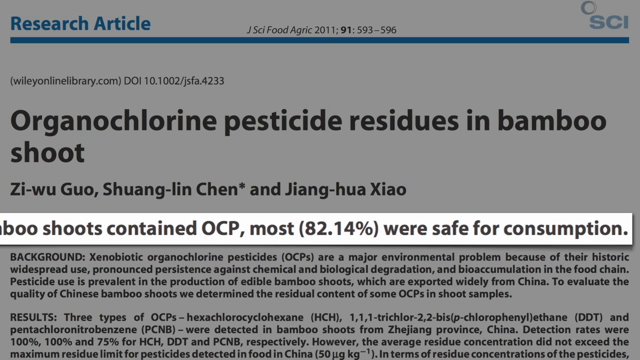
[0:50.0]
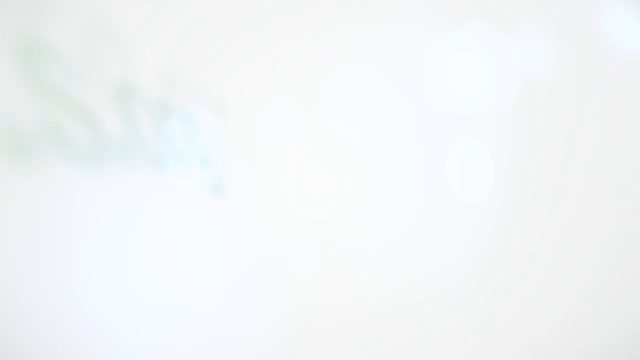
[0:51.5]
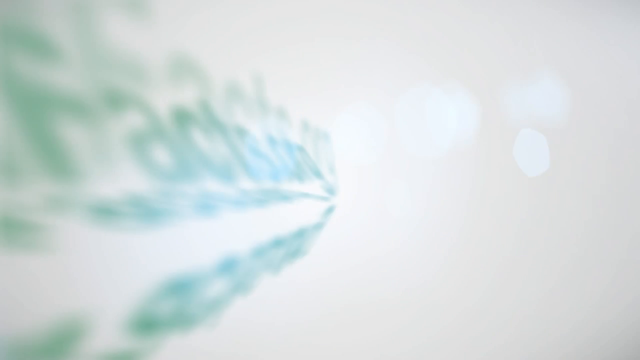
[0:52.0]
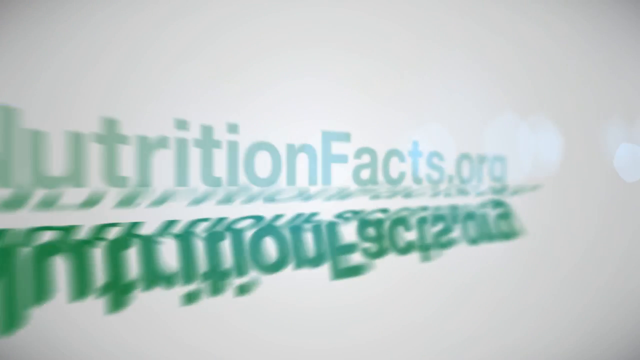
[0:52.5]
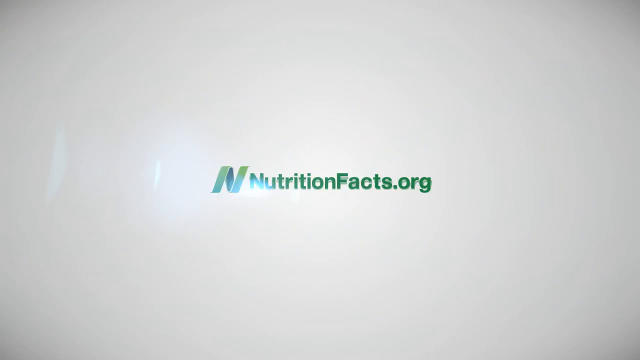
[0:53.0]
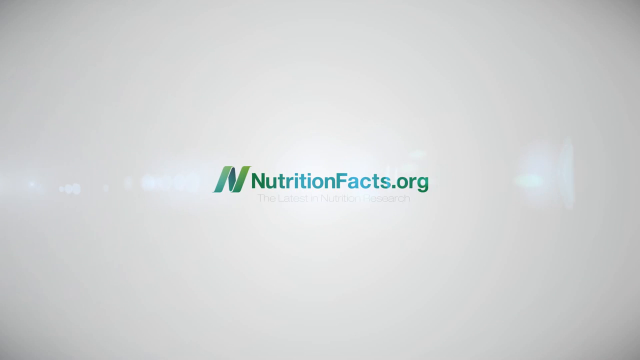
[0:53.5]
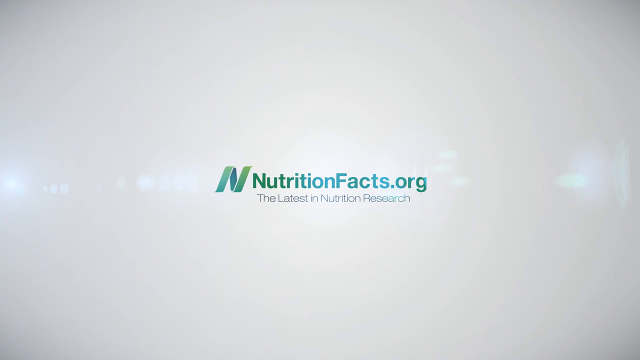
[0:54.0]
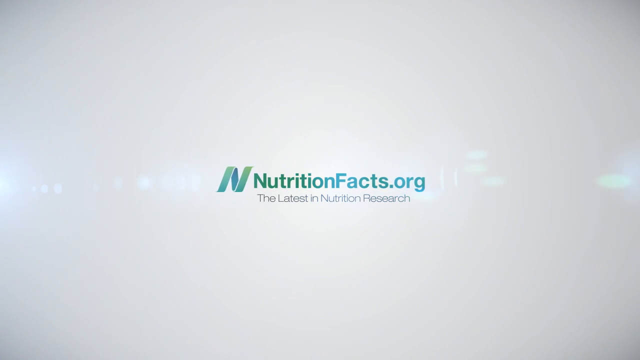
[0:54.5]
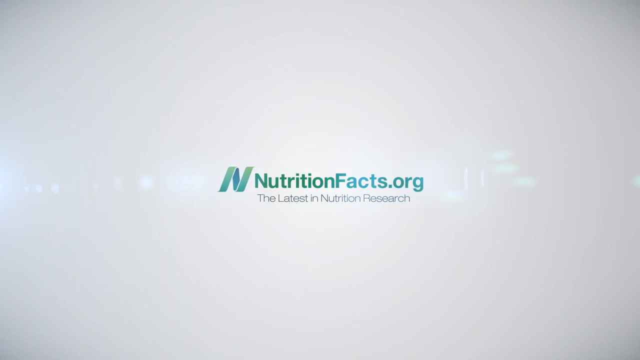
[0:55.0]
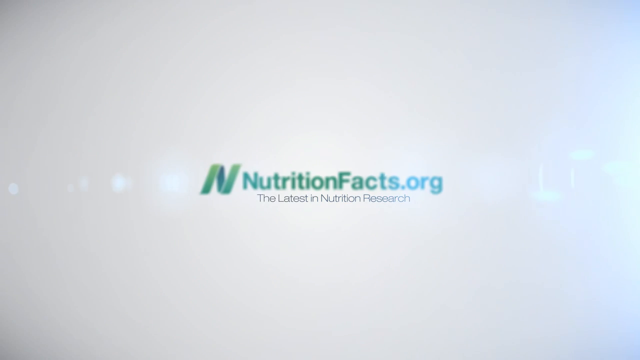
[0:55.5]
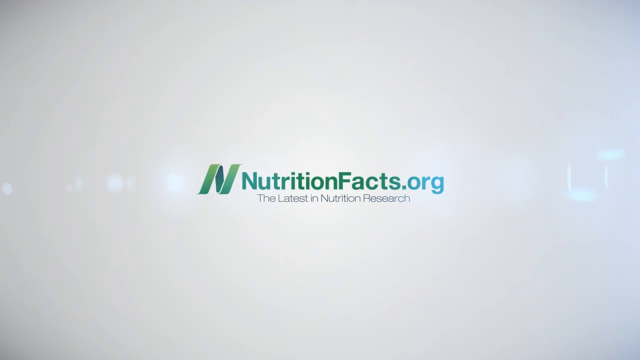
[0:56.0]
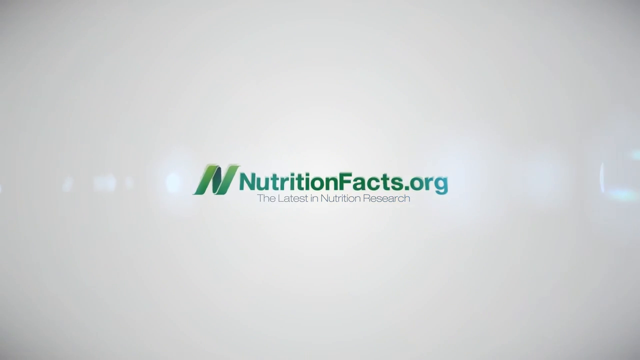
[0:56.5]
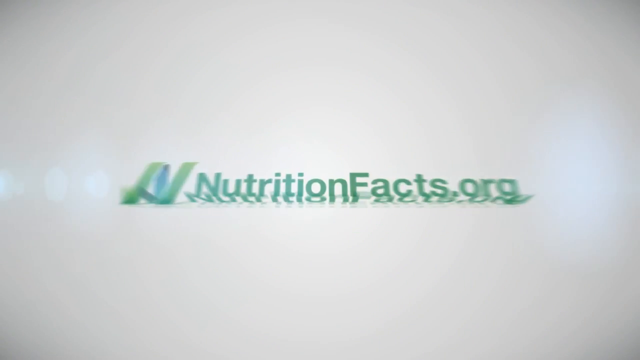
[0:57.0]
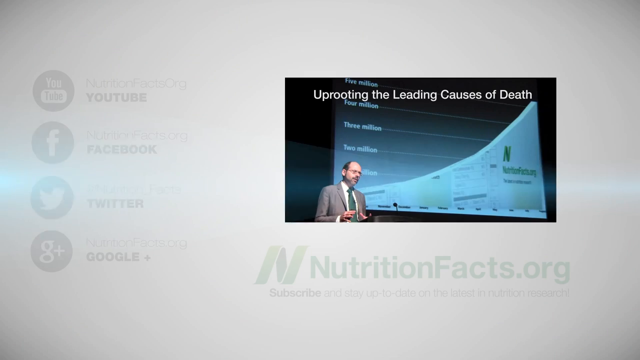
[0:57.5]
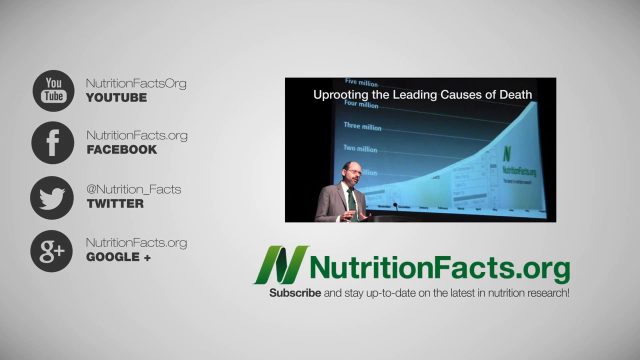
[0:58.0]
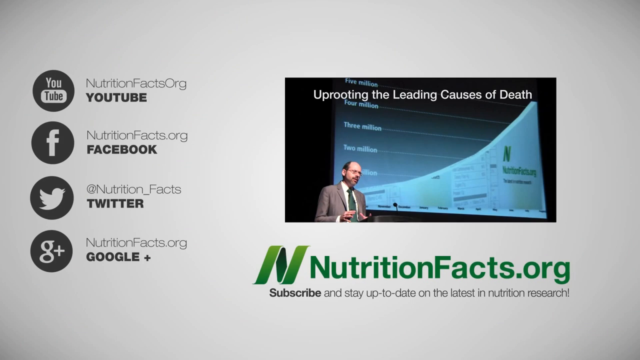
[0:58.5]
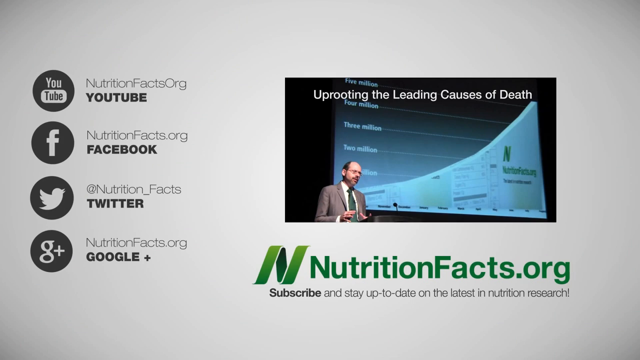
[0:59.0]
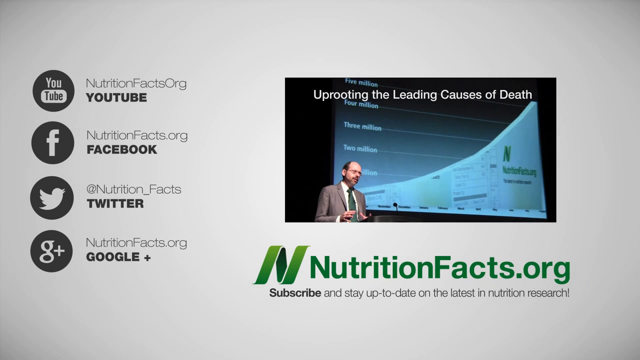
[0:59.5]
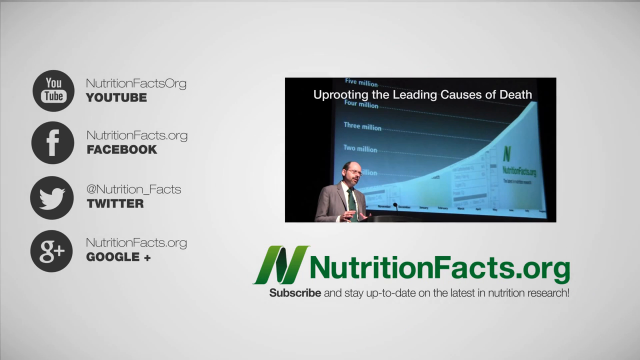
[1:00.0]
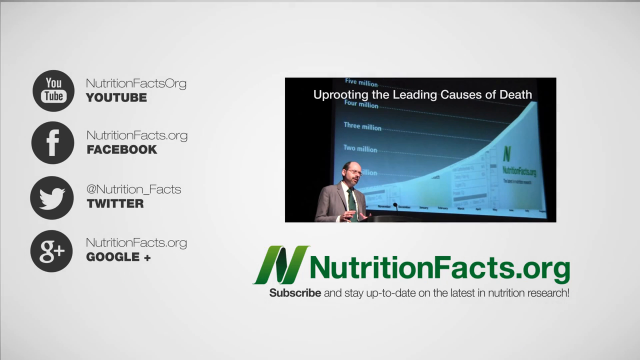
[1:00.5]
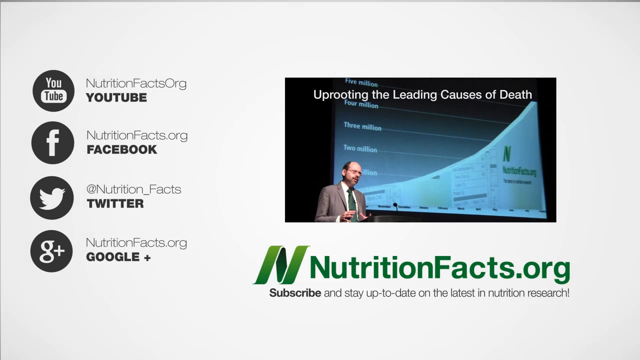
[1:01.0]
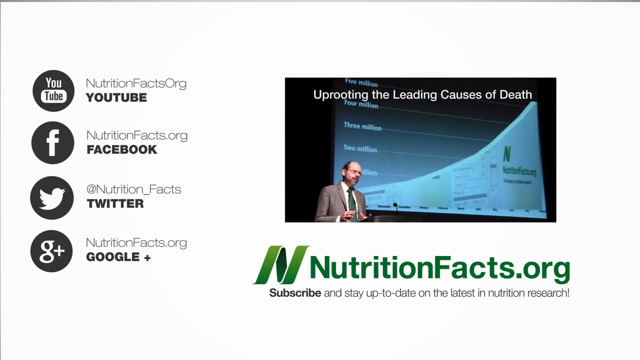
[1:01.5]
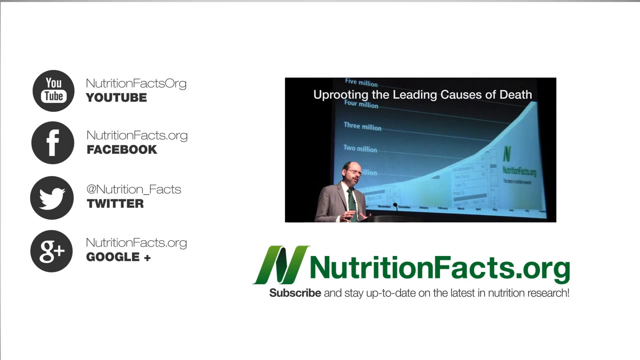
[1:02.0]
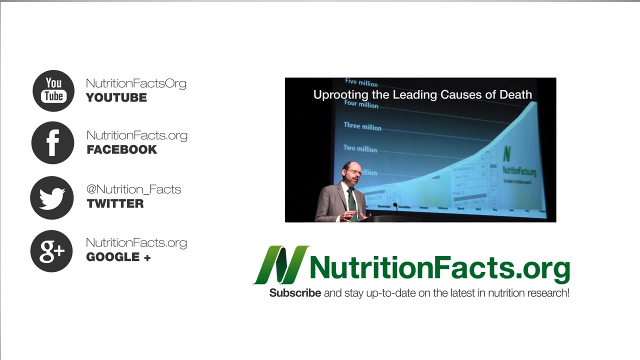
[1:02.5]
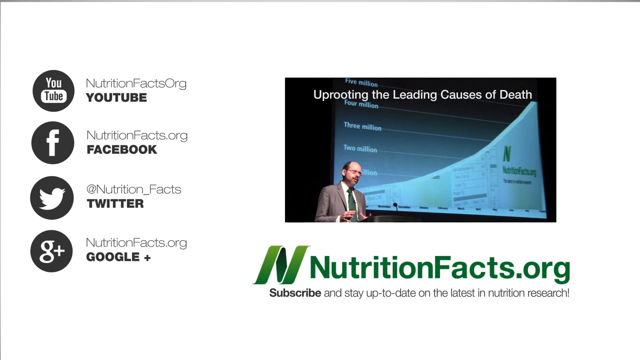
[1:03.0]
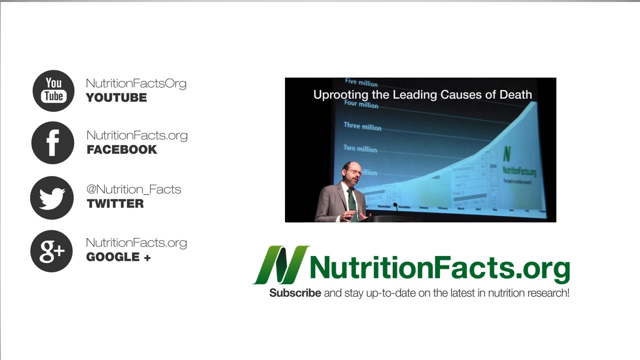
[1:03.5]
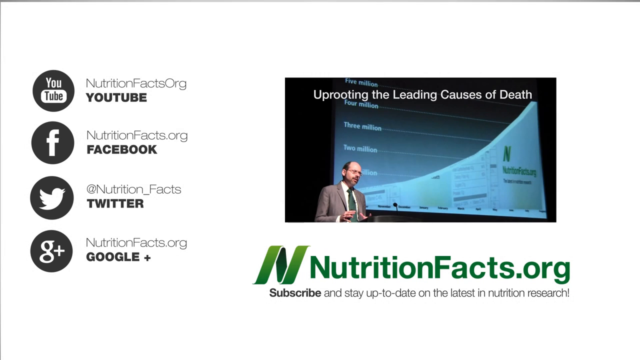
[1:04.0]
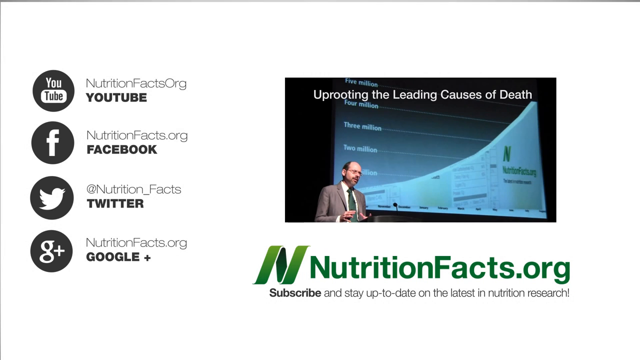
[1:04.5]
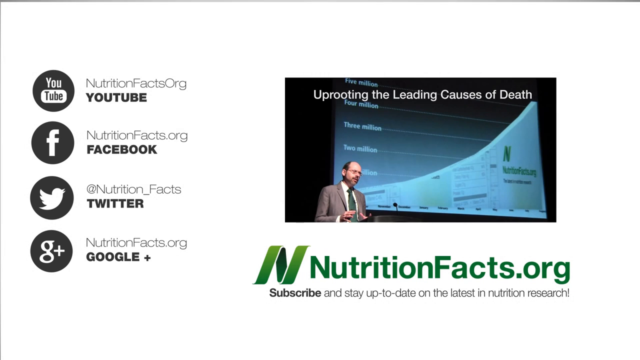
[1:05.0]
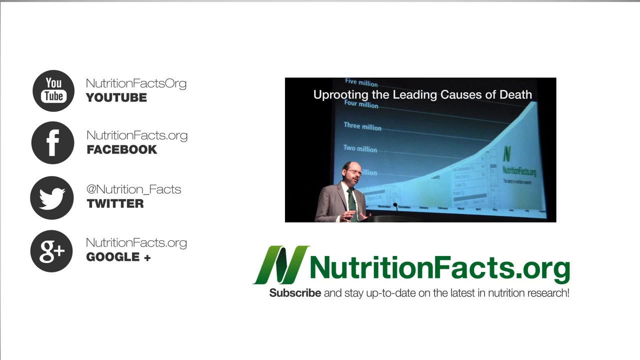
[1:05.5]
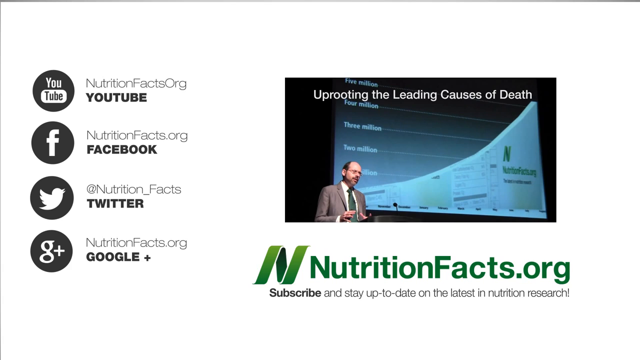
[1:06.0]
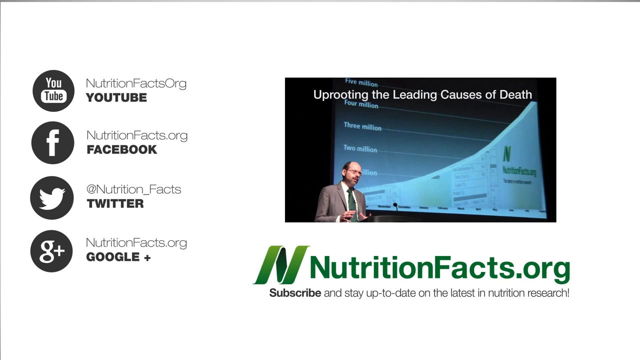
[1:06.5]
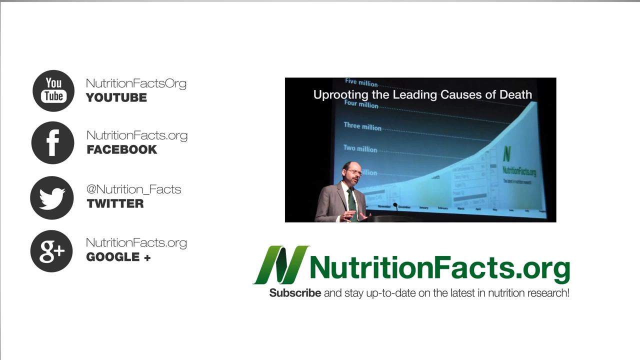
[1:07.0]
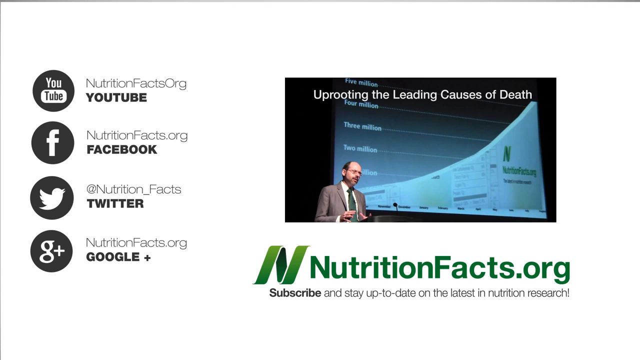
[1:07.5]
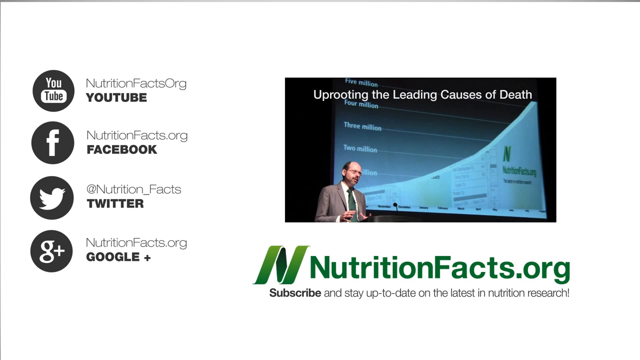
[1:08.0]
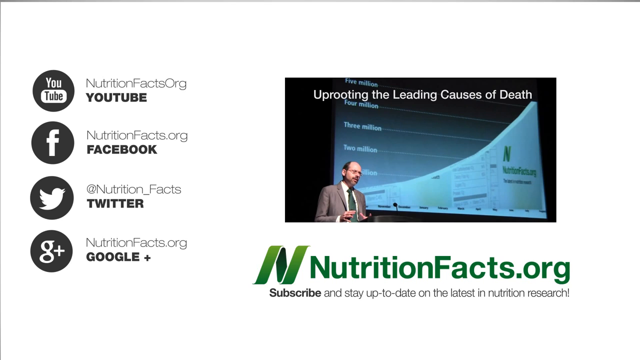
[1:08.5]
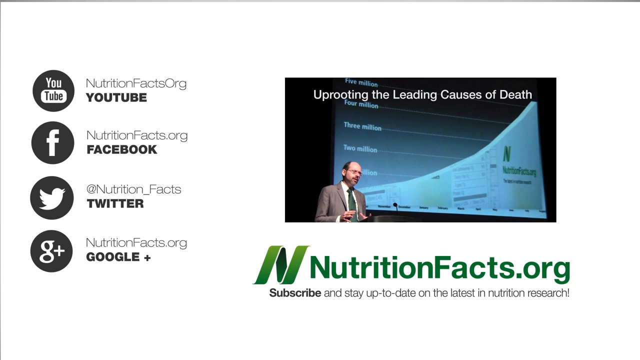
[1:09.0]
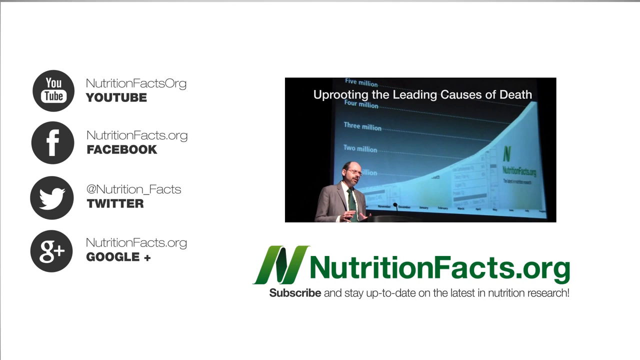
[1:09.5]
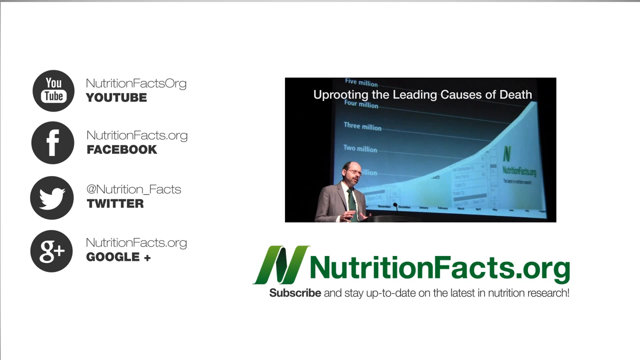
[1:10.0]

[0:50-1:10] The top of a research article is shown, with "research article" in blue lettering in the top left-hand corner and the journal information and website address in small black lettering. Beneath is the bold headline "Organochlorine Pesticide Residues in Bamboo Shoot" and the authors. The article has been faded to a grey background, with a white text box across the top. The screen then changes and the logo appears again, with the N and "nutritionfacts.org" in green lettering and, underneath in black, "the latest in nutrition research". The final screen shows four circular icons for YouTube, Facebook, Twitter and Google down the left-hand side, with the addresses for finding the organisation on those social media. On the right-hand side is a large rectangular image of a man in a grey suit with a deep grey tie and glasses talking at a podium, with a graphic behind him on uprooting the leading causes of death. Below it is the green Nutrition Facts logo again, and finally it says "subscribe" in bold black font and "stay up to date on the latest in nutrition research".